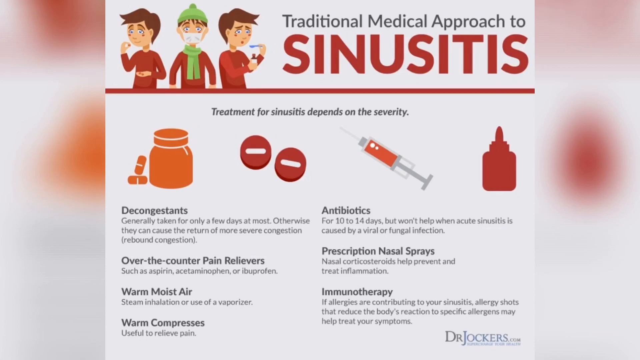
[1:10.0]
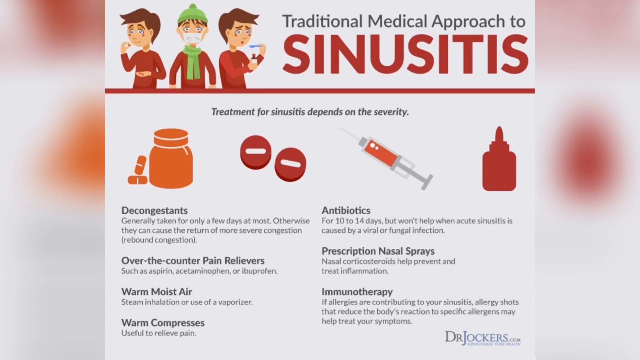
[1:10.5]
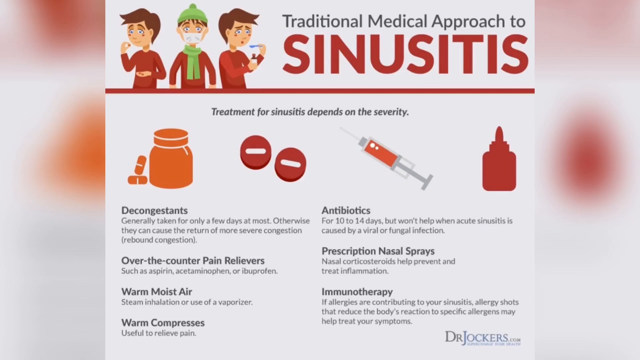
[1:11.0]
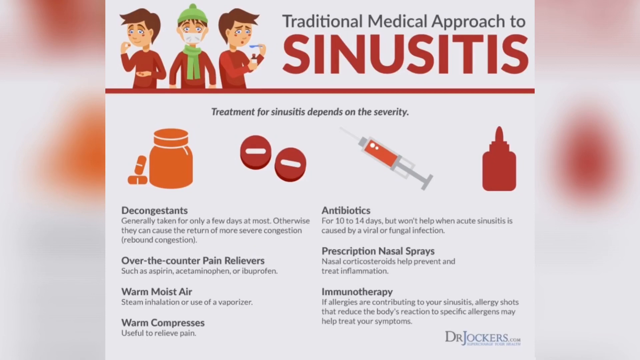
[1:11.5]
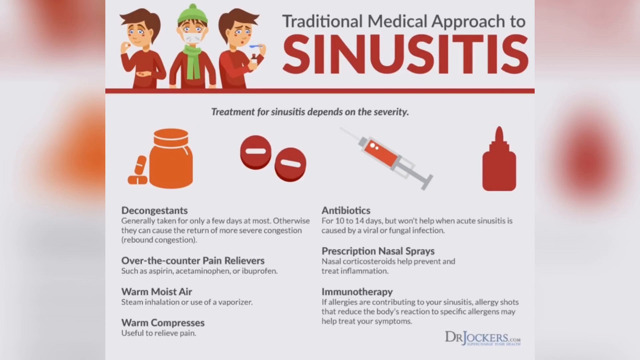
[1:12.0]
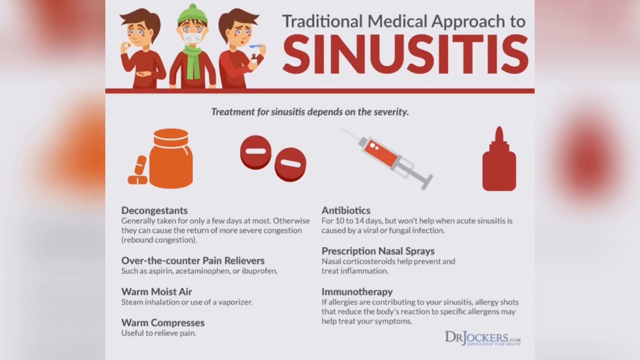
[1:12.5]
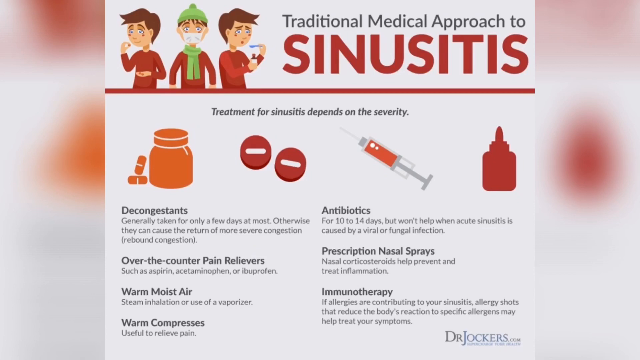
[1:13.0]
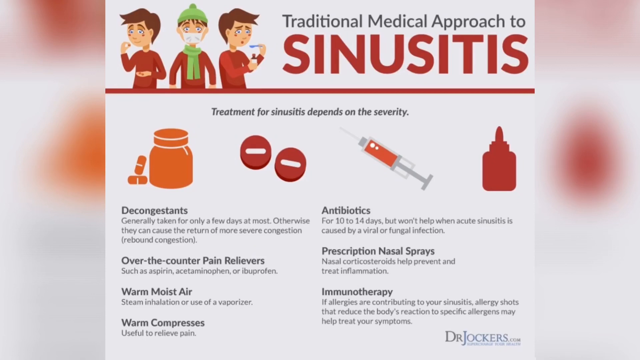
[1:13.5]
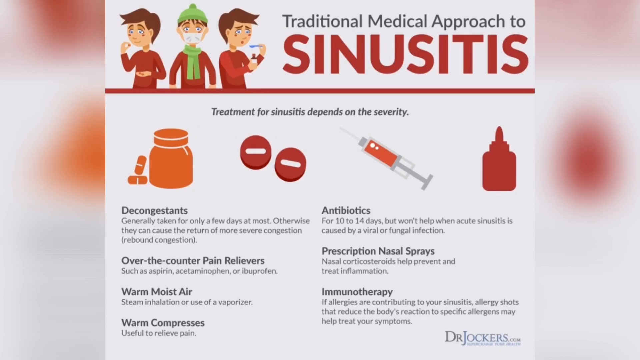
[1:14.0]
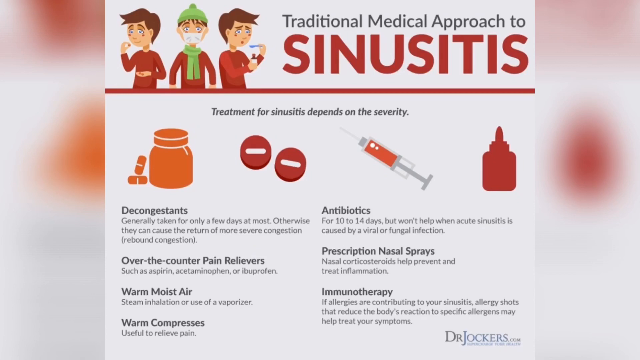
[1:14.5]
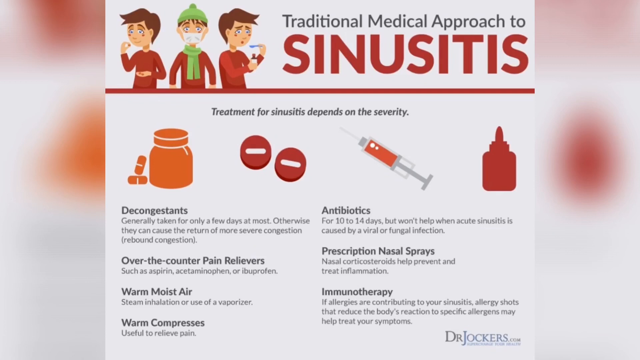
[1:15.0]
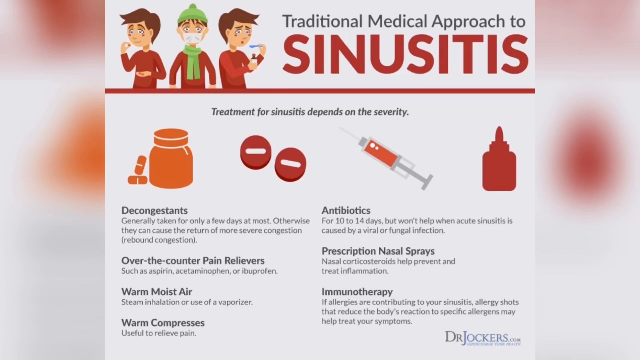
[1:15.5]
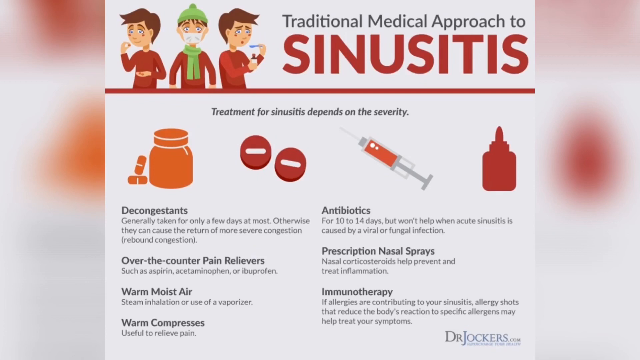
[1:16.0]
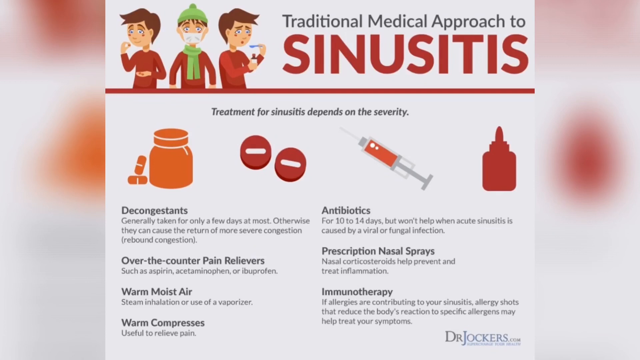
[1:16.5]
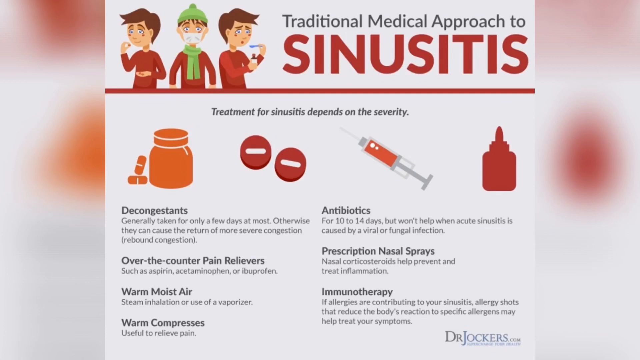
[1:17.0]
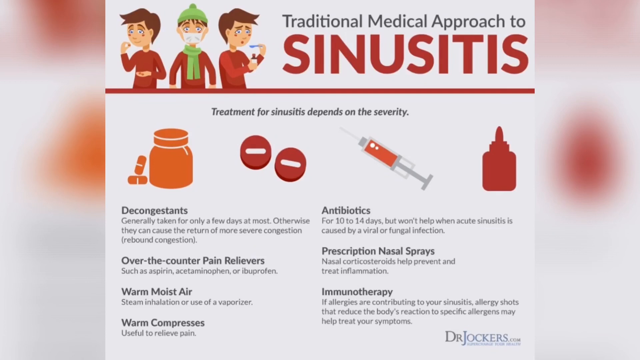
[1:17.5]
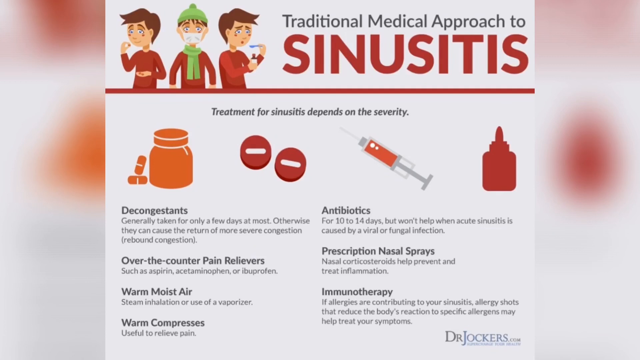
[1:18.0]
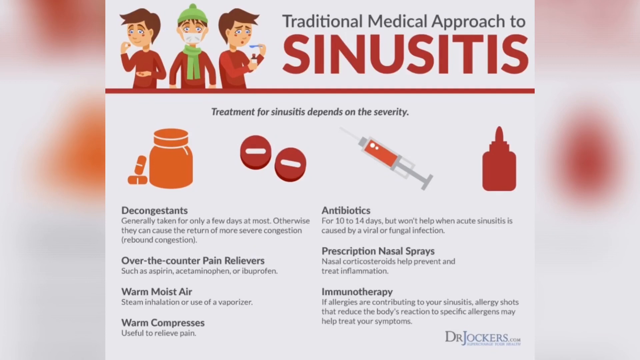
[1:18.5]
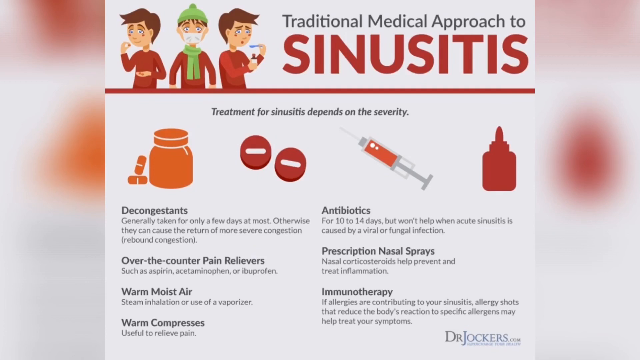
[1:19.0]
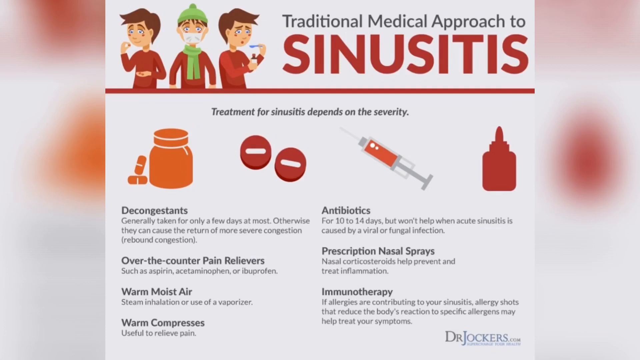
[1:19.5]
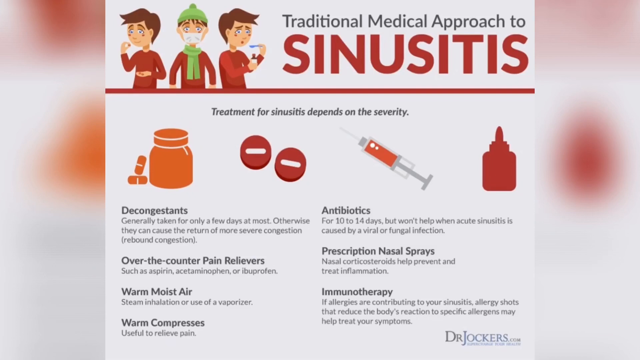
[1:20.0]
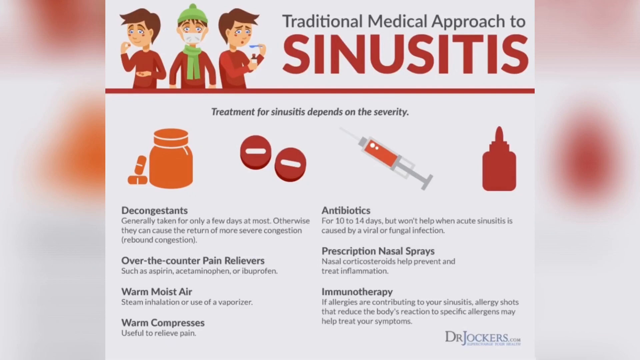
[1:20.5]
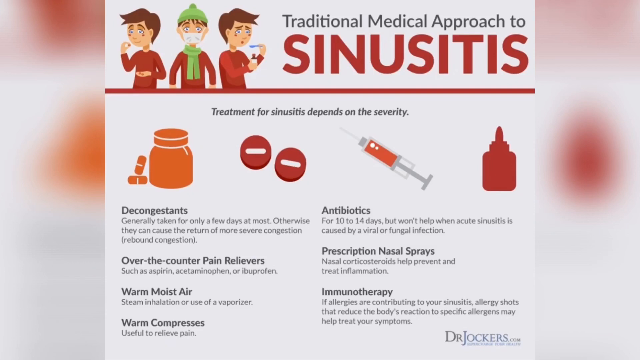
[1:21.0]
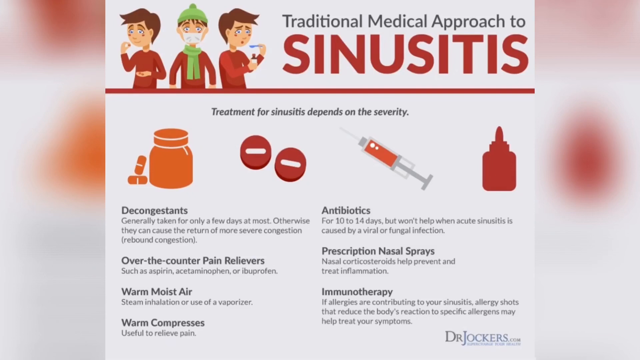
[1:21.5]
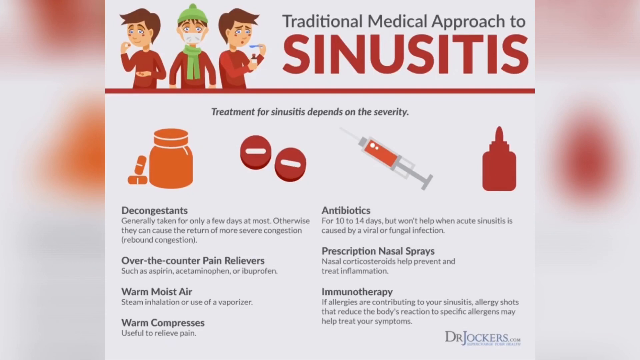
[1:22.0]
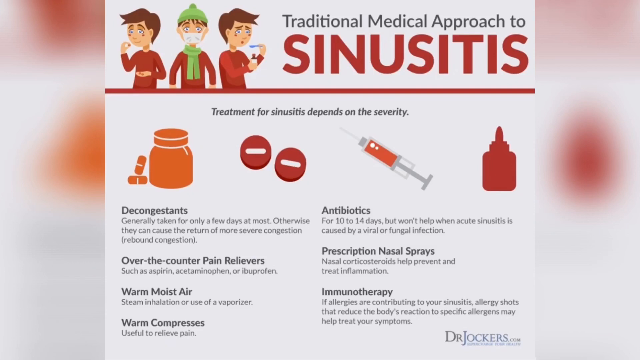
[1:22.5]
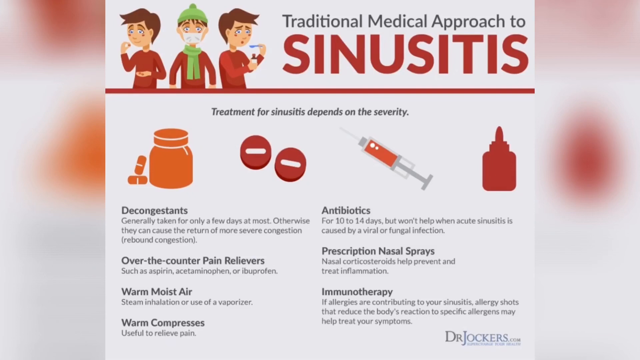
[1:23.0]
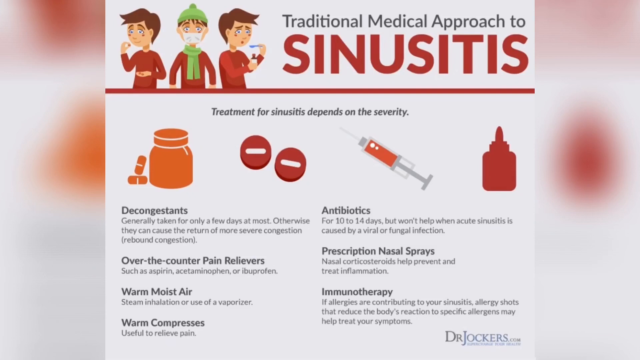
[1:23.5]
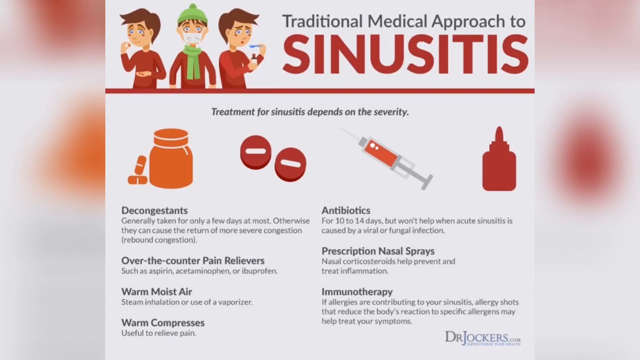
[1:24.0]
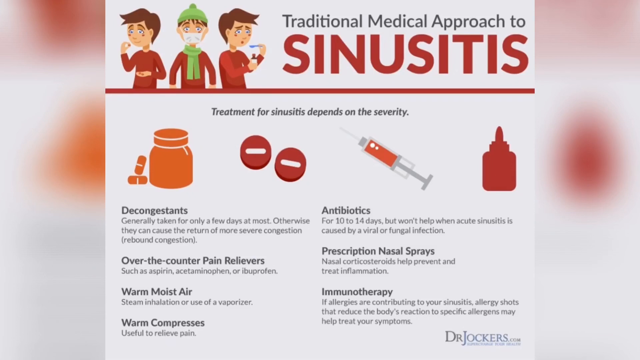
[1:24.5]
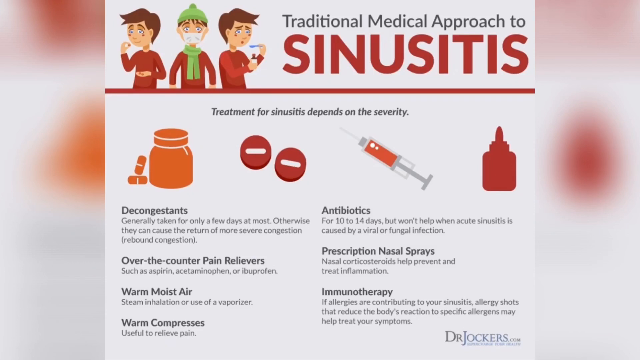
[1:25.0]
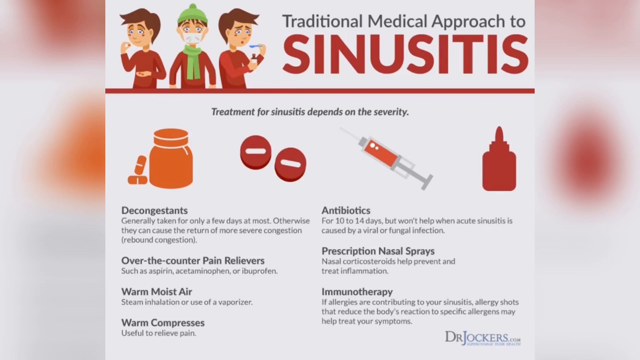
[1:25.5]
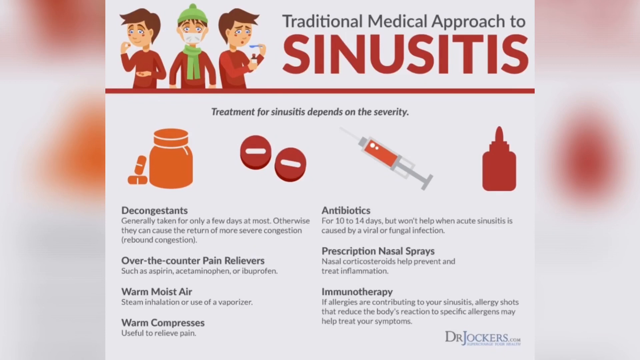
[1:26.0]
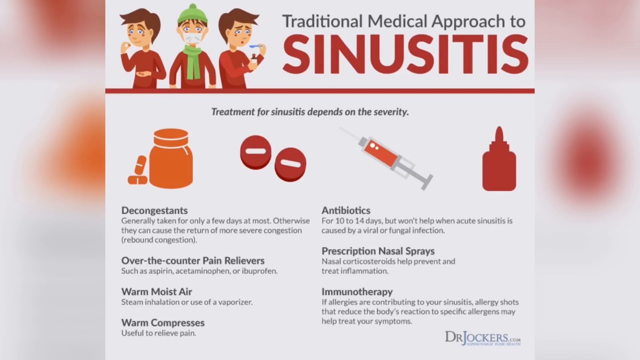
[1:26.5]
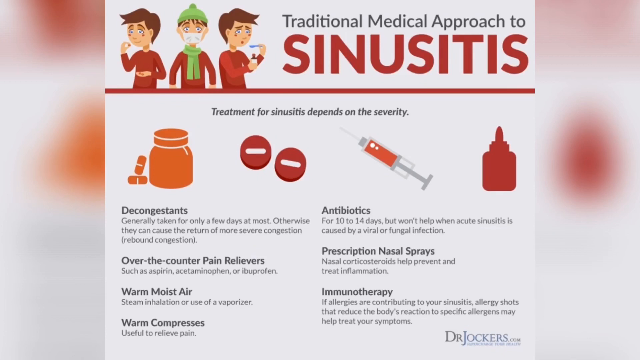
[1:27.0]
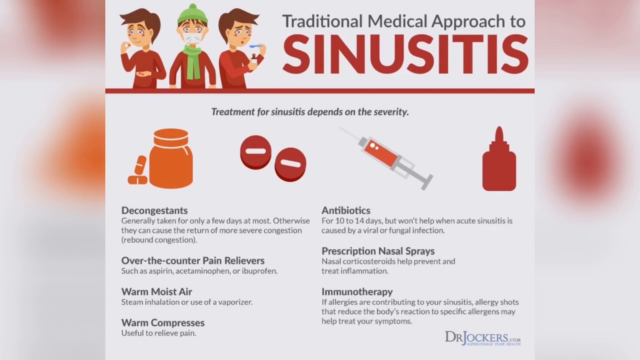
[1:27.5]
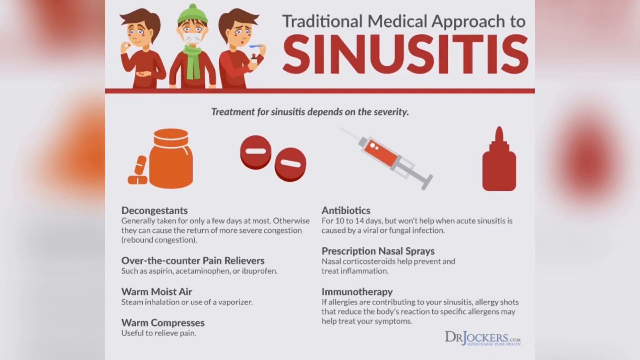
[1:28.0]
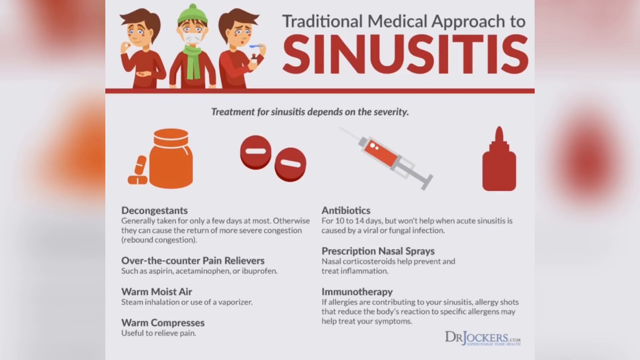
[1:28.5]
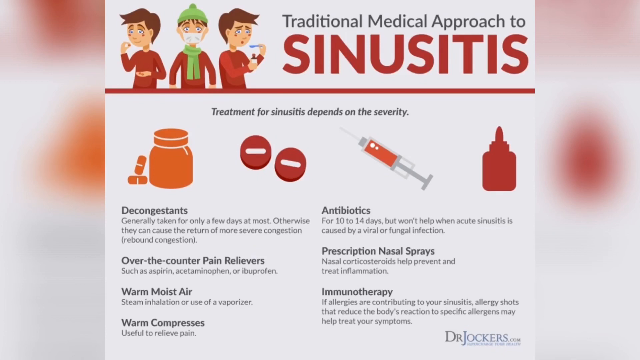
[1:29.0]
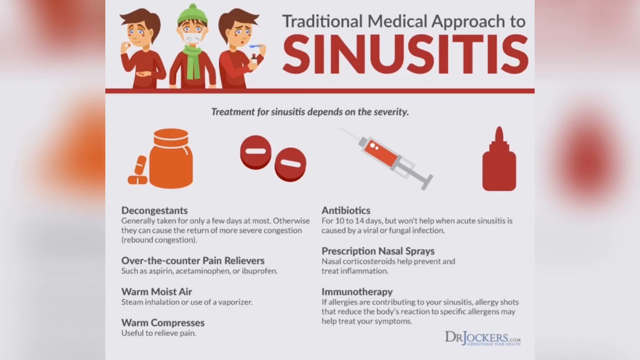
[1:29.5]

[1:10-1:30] A slideshow slide is titled "traditional medical approach to sinusitis". On the left are computer-generated images of three men, or the same man three times. The person in the middle wears a mask on their face, a green beanie hat, and a green scarf. The person on the left is taking a pill with their right hand and holding pills in their left hand. The person on the right is taking liquid medicine, holding the liquid in their left hand and the bottle in their right. The rest of the chart lists traditional approaches to sinusitis: first decongestants, second over-the-counter pain relievers, third warm moist air, fourth warm compresses, fifth antibiotics, sixth prescription nasal sprays, and seventh immunotherapy.